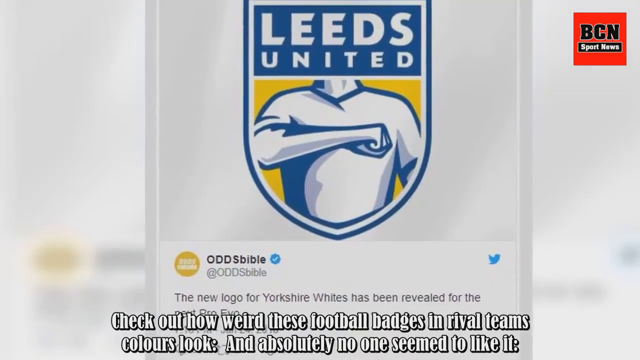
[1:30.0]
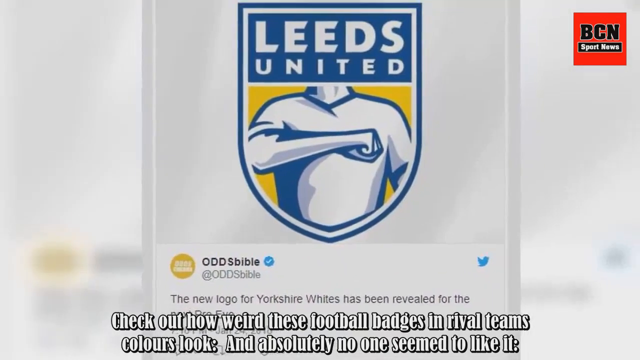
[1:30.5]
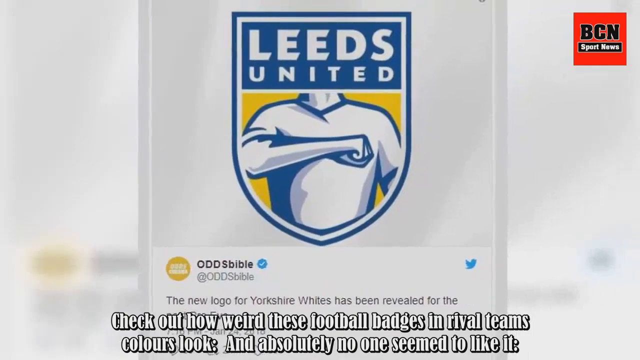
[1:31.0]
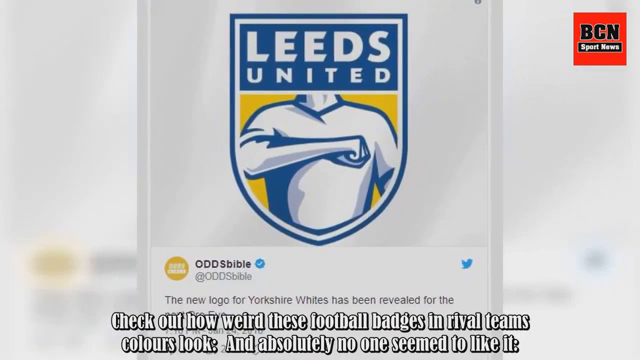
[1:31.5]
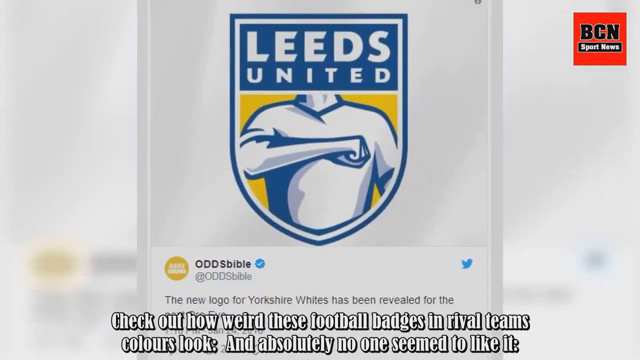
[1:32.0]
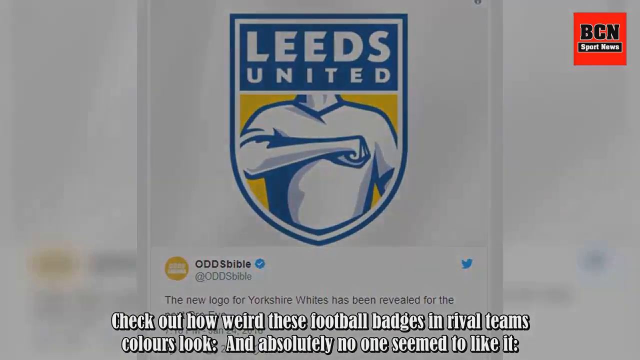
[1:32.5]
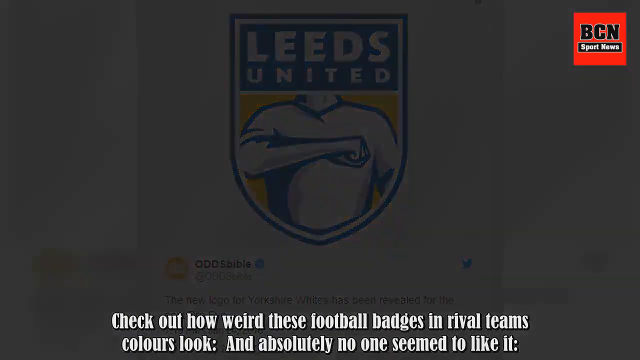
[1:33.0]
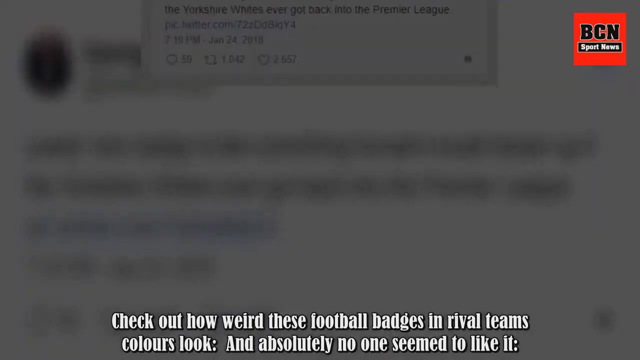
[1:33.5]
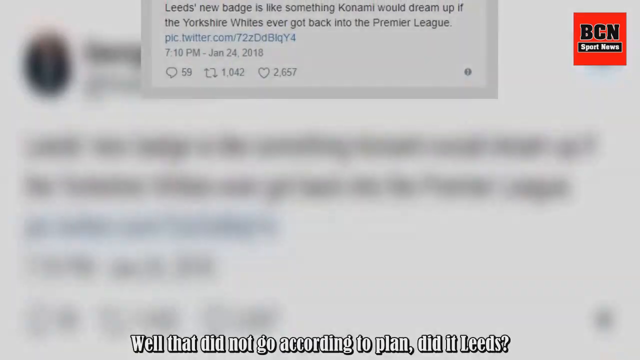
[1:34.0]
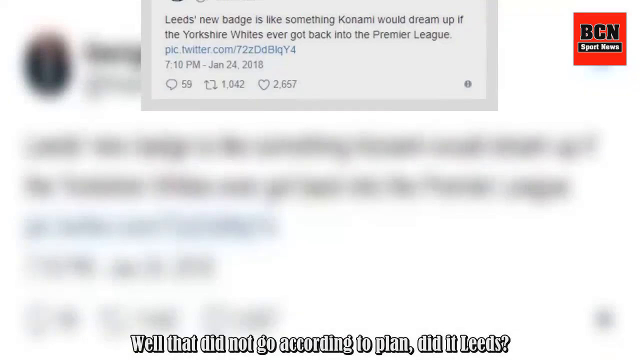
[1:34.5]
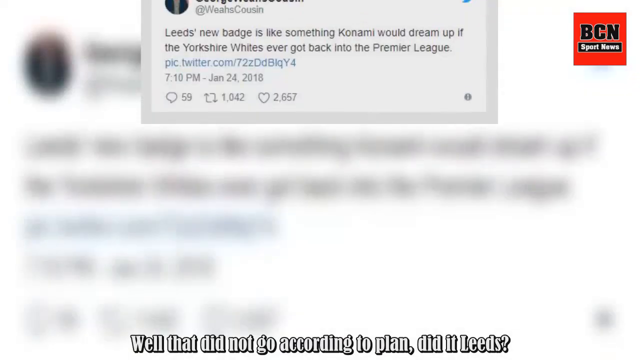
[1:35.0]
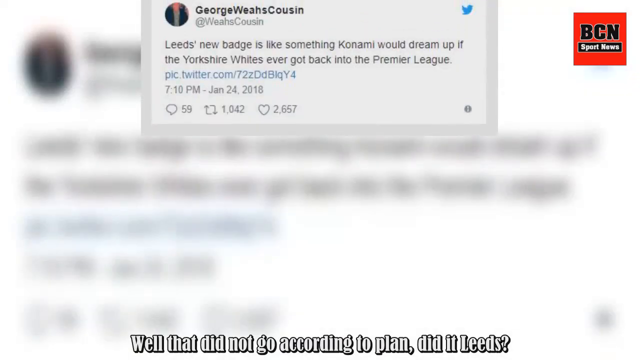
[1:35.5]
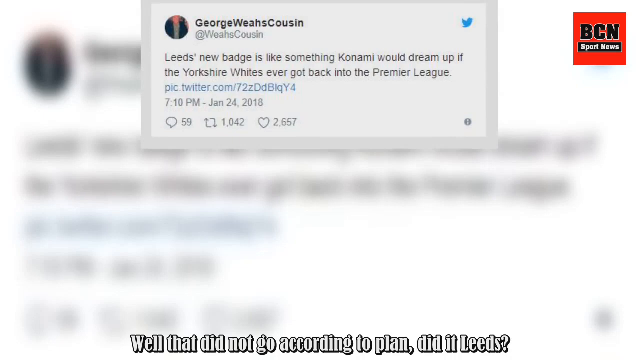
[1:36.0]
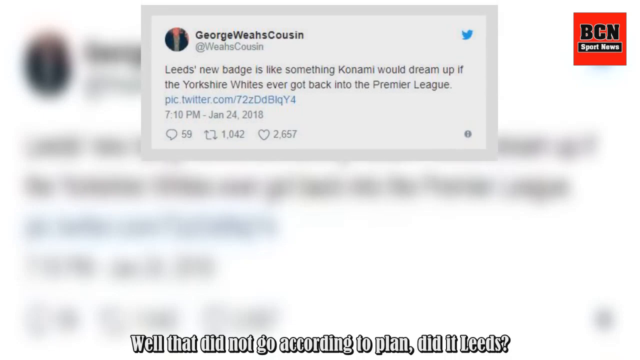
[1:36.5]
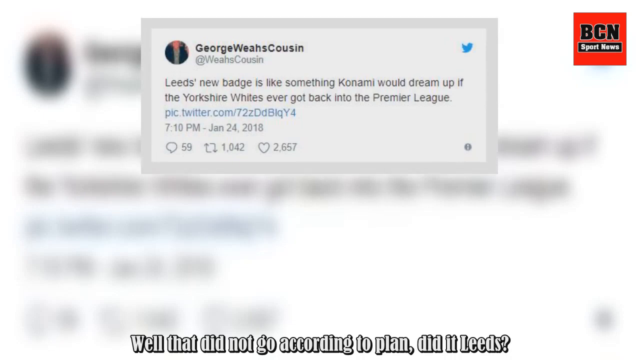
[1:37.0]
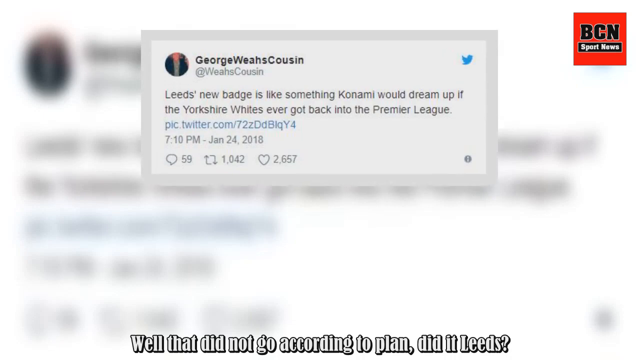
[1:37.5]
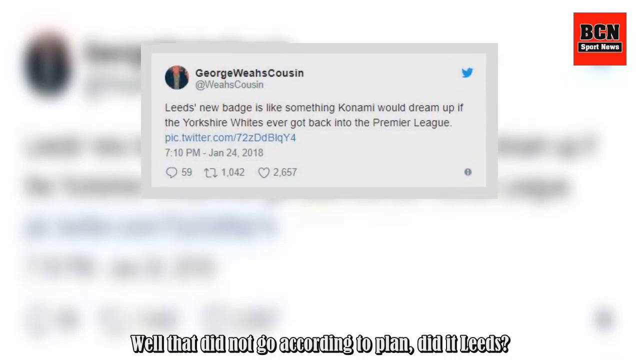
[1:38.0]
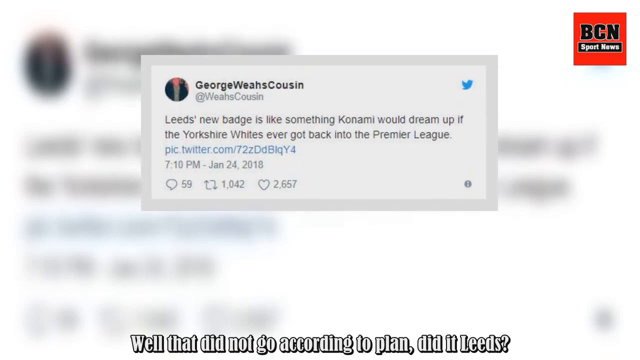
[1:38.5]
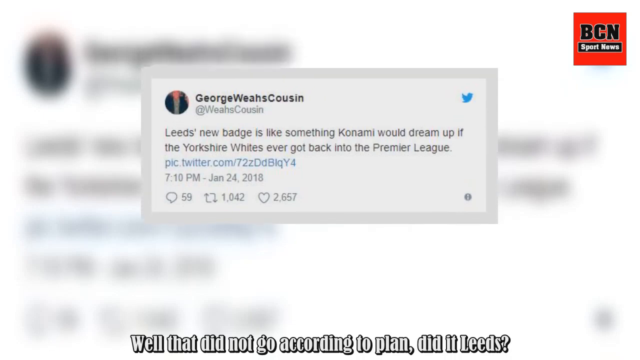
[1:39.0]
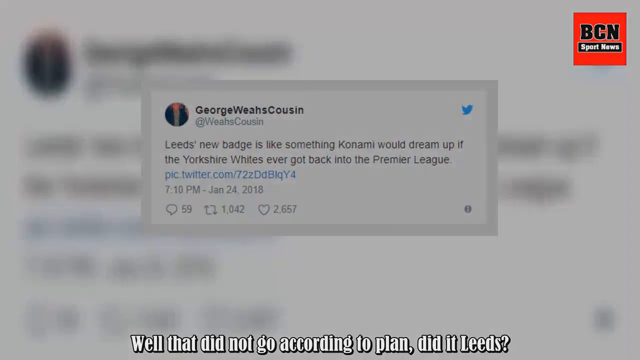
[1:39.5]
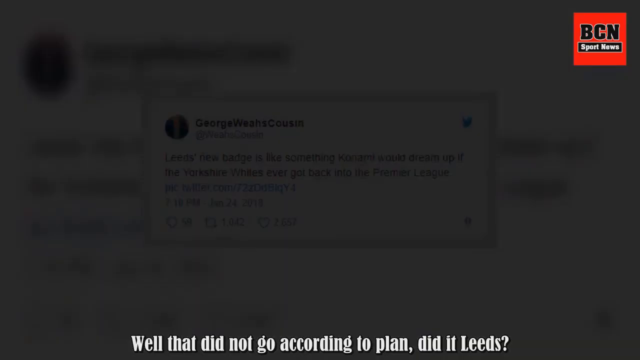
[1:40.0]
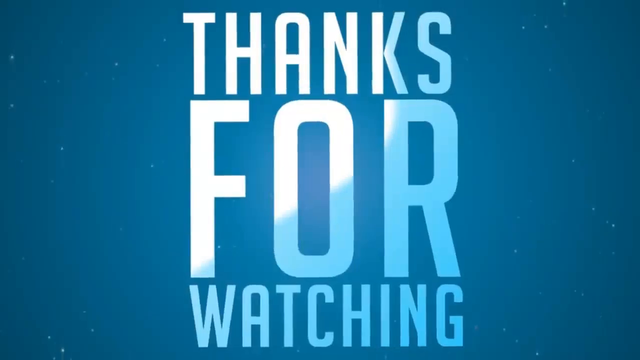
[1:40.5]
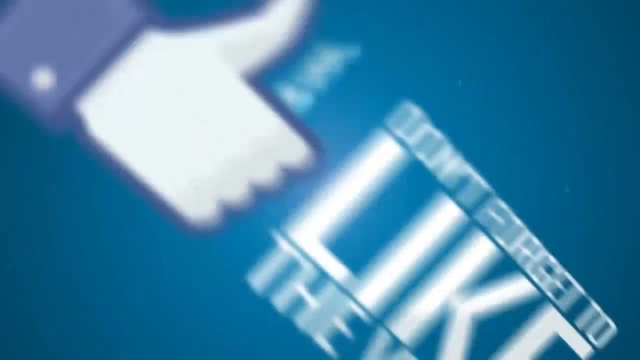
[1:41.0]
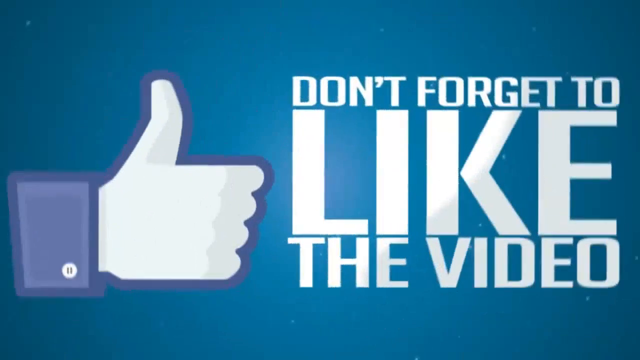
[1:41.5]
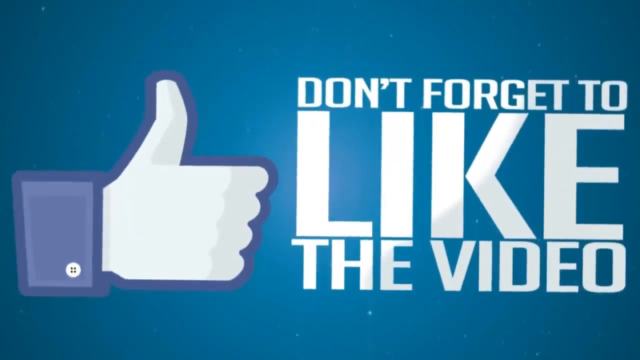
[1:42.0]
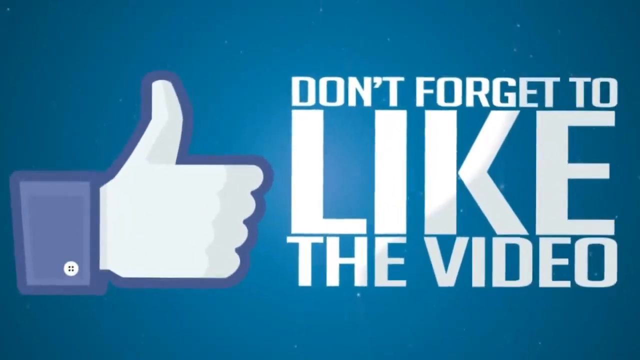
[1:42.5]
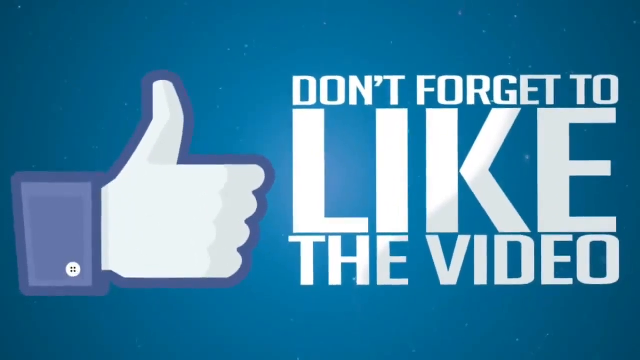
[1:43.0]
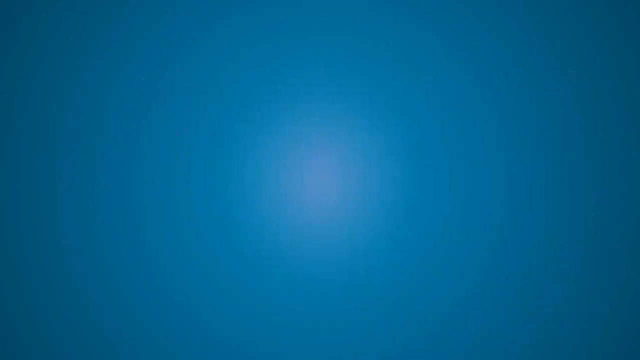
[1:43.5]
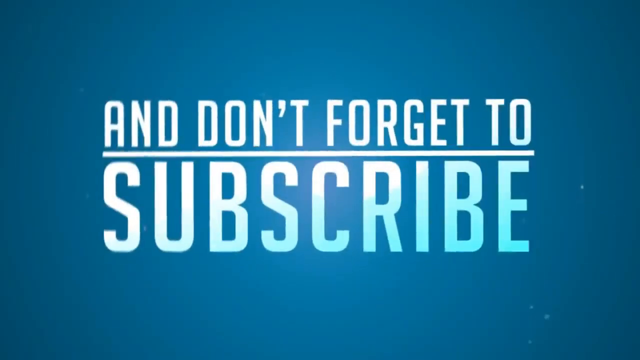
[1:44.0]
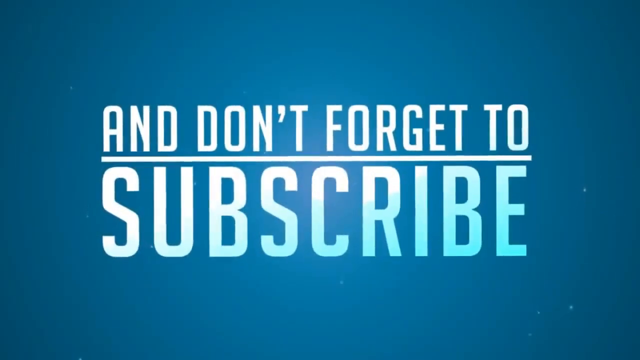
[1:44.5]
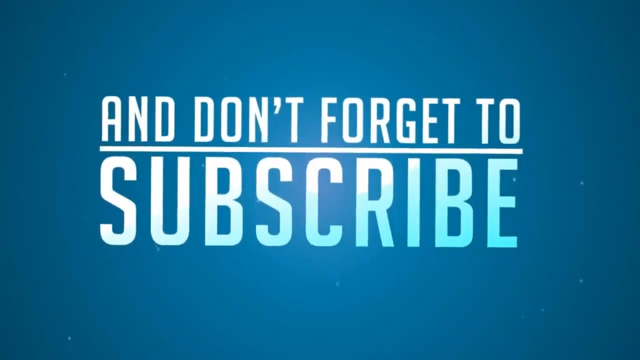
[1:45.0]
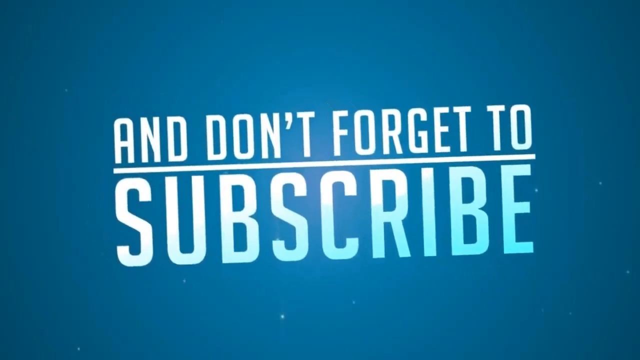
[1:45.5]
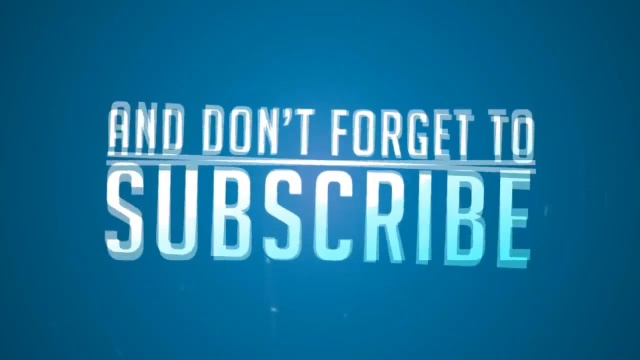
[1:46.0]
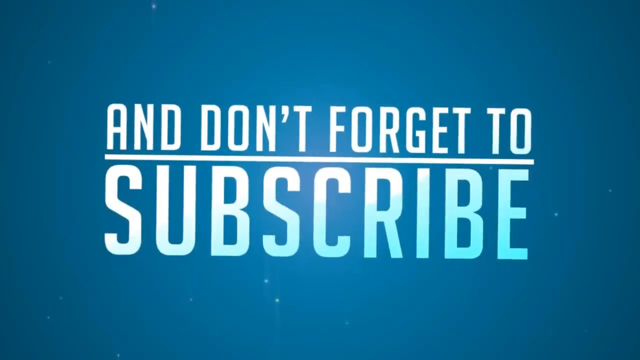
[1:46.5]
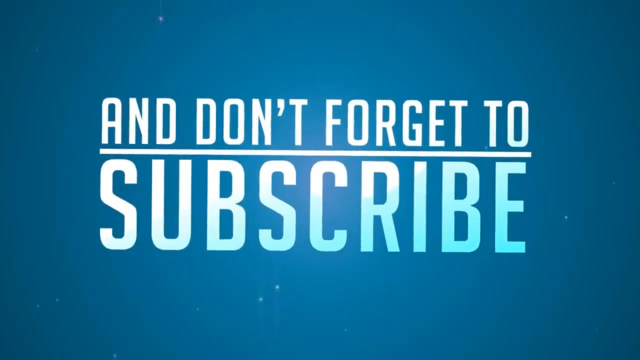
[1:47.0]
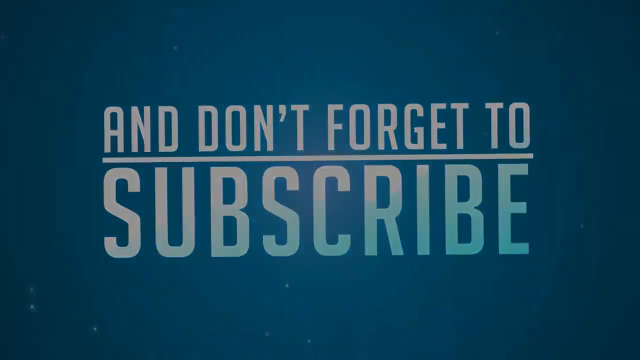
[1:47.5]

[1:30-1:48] A Twitter post shows the Leeds United logo at the top, with a torso beneath it whose right arm goes across the chest with the fist closed. White text at the bottom of the screen reads "Check out how weird these football badges in rival teams colors look and absolutely no one seemed to like it." The image fades to black, and new text comes from the top of the screen and slowly moves down; it seems to be written by George Weahs cousin. As it moves down, white text at the bottom of the screen reads "Well that did not go according to plan did it Leeds". It fades away, and a slide reads "Thanks for watching" in white and light blue, on a blue background with what seem to be stars and a thumbs up.